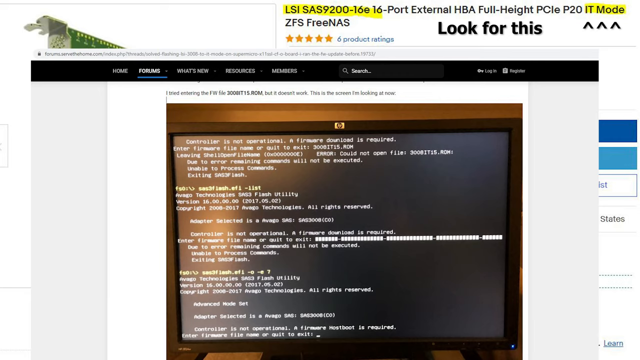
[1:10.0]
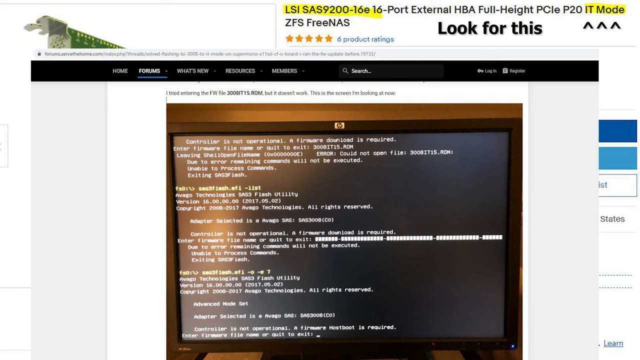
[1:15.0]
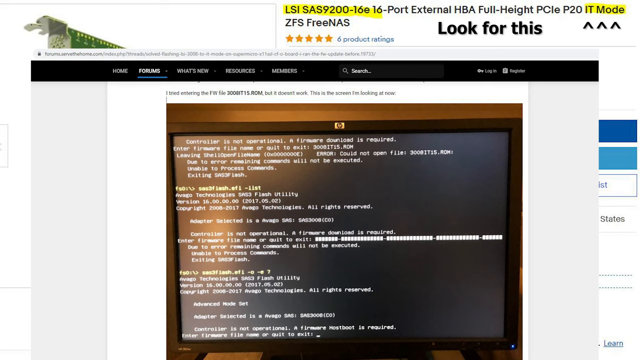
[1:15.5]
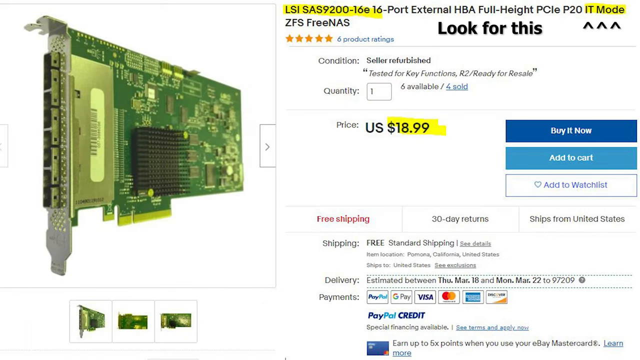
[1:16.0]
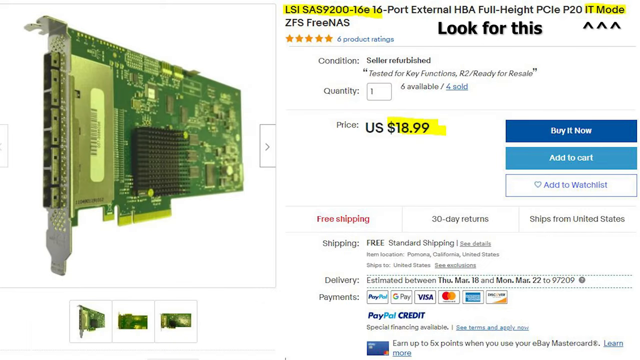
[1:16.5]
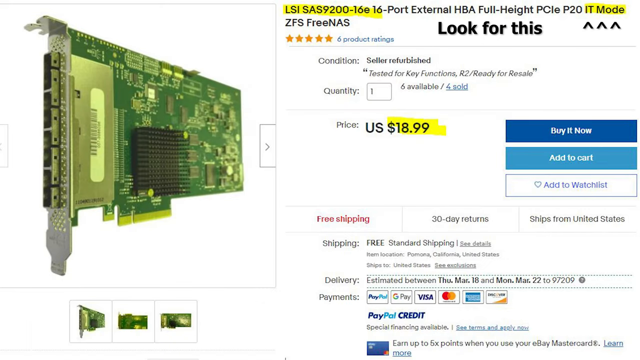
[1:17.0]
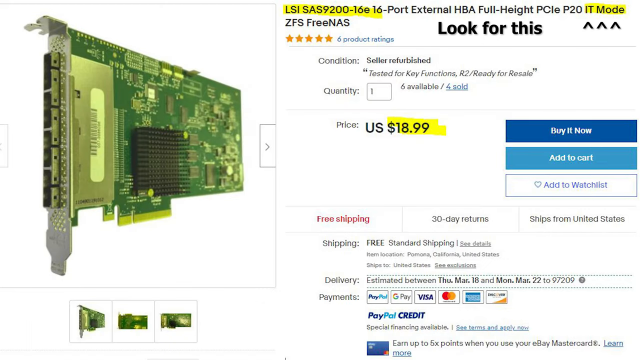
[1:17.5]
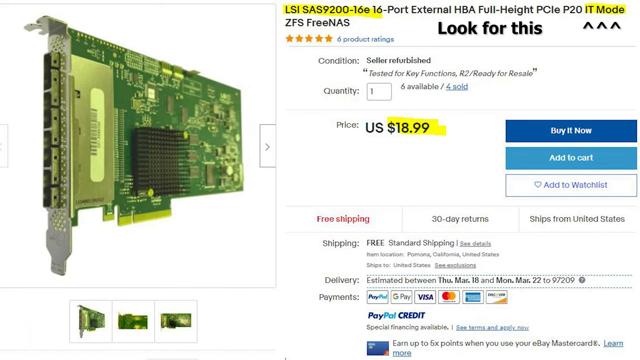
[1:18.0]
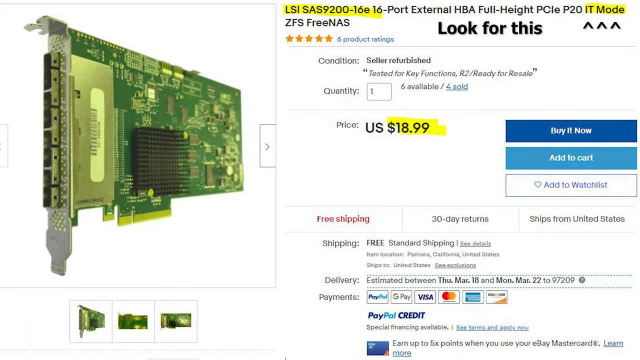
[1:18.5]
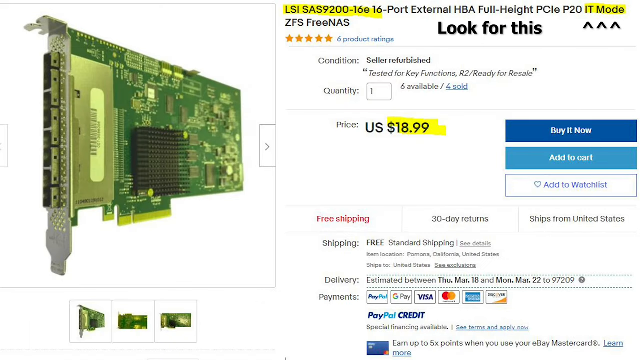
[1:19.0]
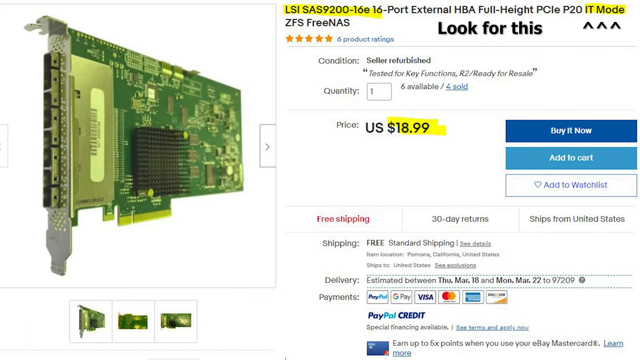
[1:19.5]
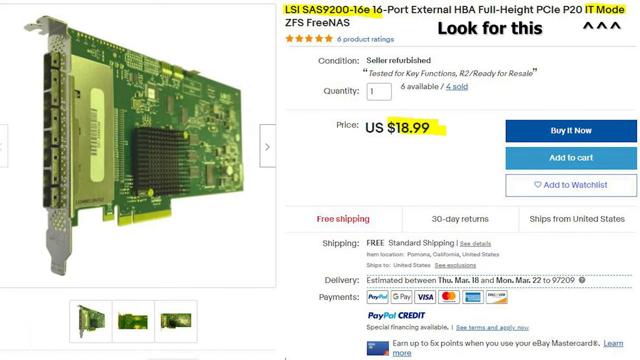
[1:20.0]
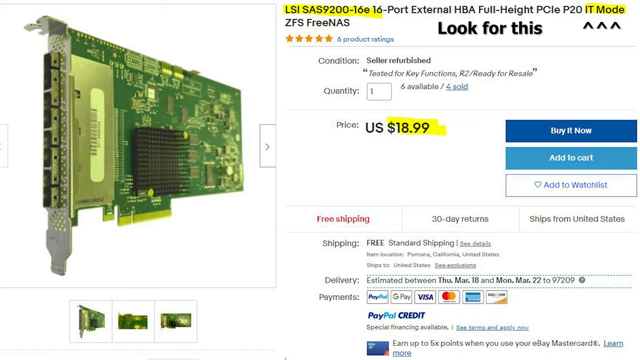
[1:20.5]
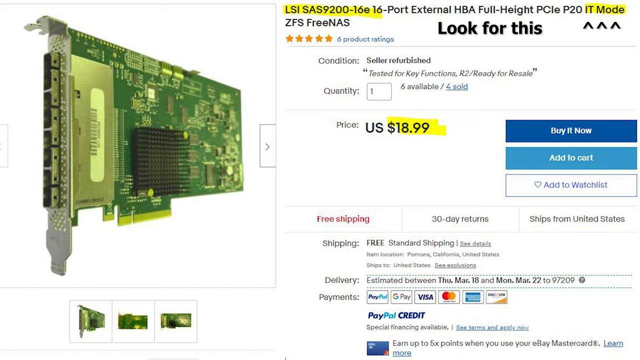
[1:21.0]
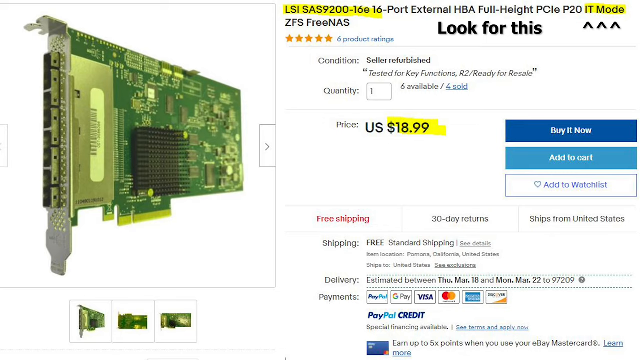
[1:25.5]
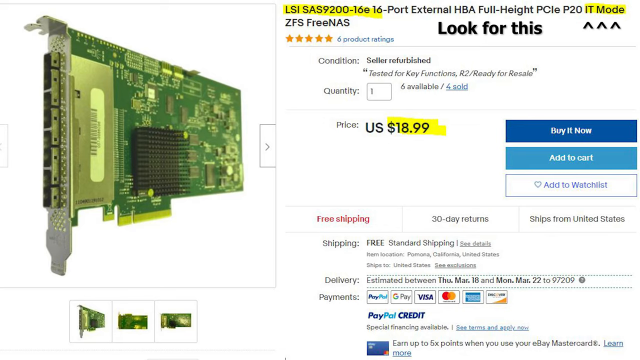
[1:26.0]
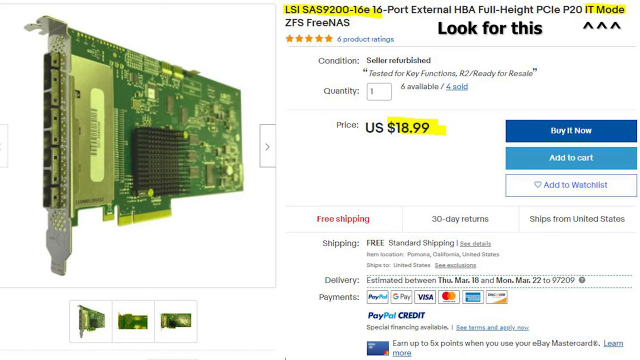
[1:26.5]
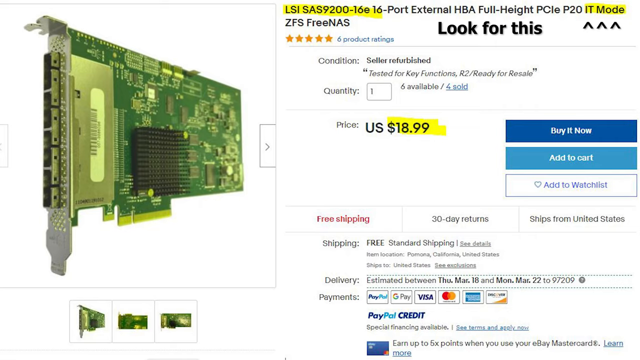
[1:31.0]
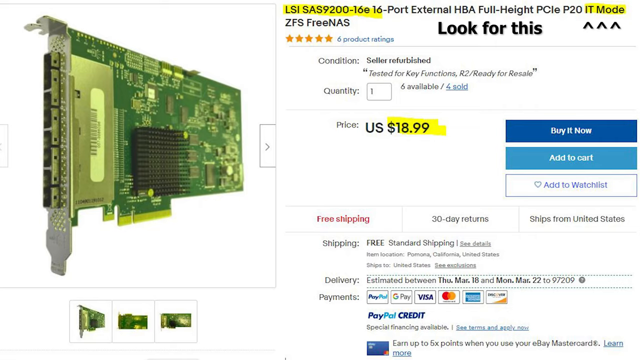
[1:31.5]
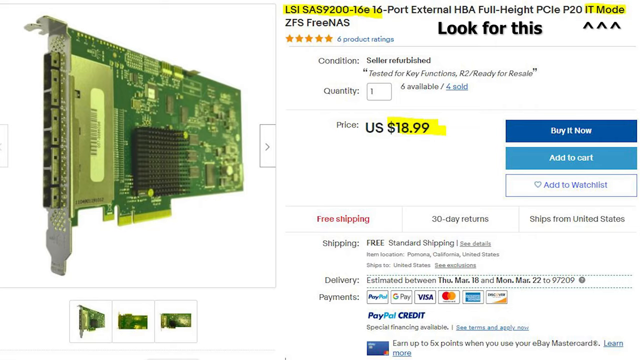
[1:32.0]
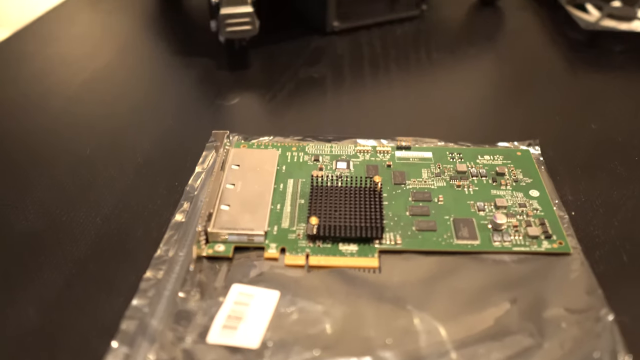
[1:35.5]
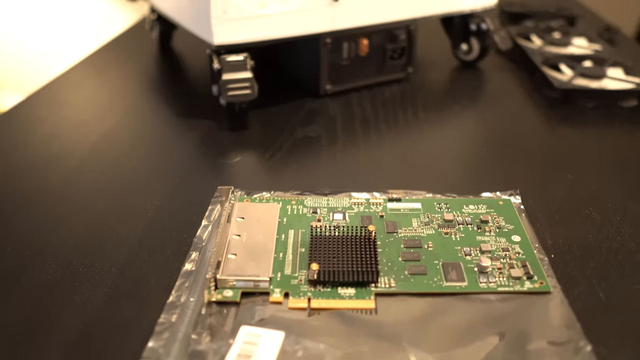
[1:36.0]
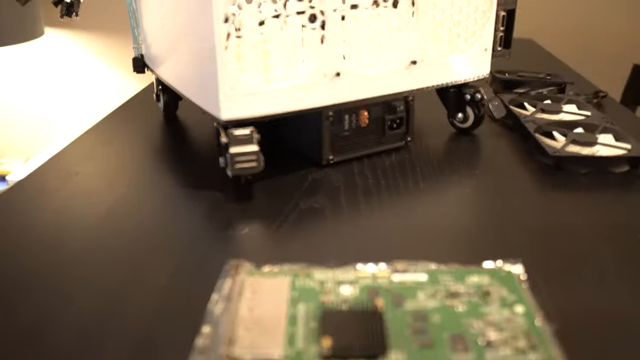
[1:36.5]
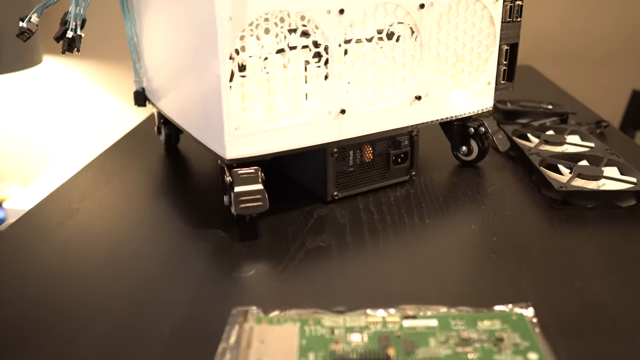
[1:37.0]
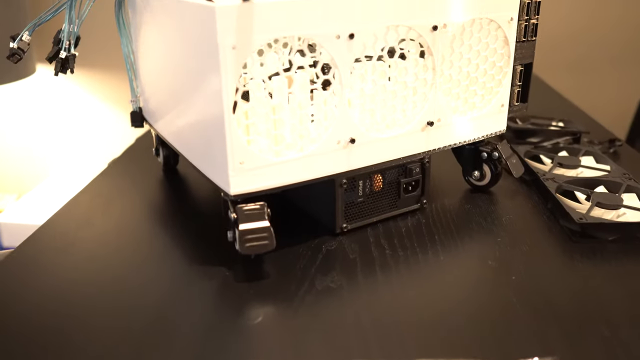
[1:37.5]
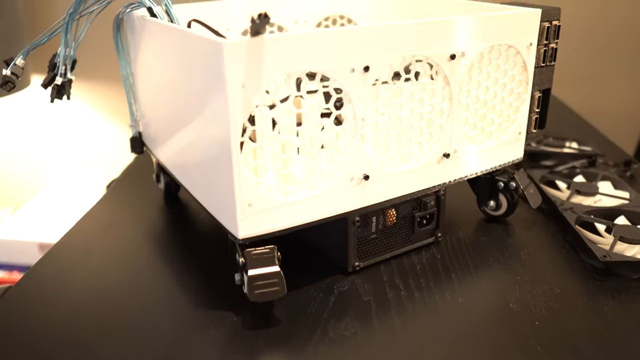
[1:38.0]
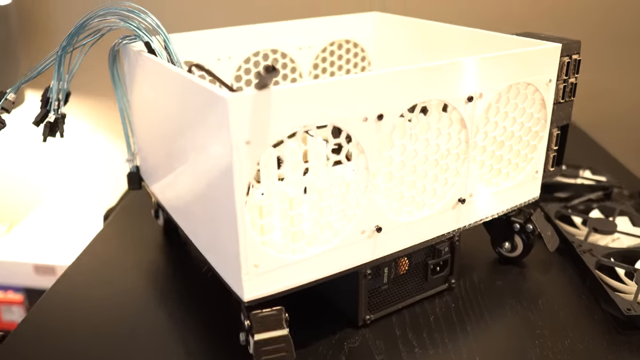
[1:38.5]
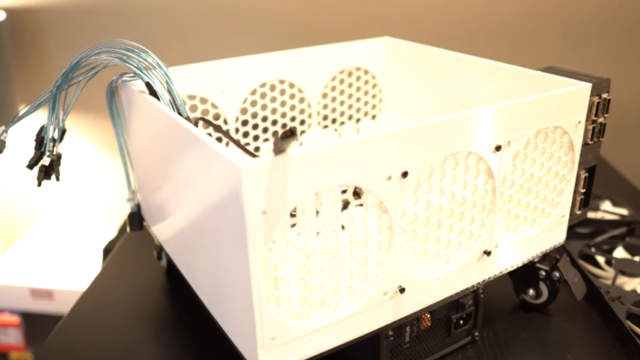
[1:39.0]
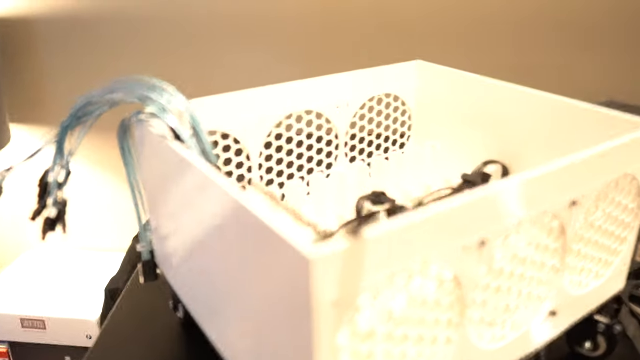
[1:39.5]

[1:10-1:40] A purchase page for the USB Type port is shown, apparently on Amazon. The page lists the price of the item, the shipping and handling cost, and when the item can be expected; the price is $18.99. The green hard drive with silver markings is pictured, and there appear to be three different pictures on the page. There are options to buy now or add it to the cart and save it for later. The page says it ships from the United States, has free shipping, and a 30-day policy on all returns. Further down, it shows that most forms of payment are accepted, including PayPal, Visa, and other basic credit cards.